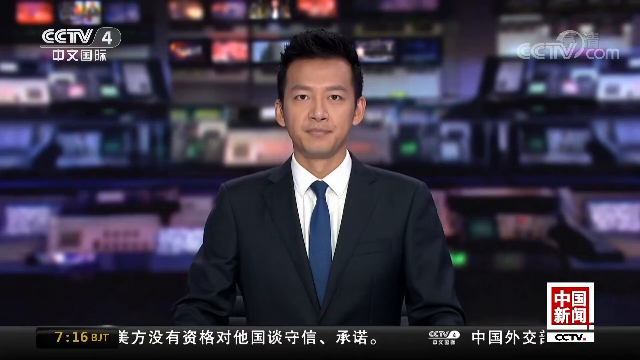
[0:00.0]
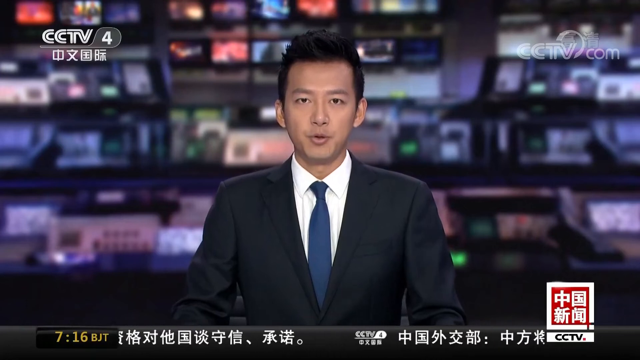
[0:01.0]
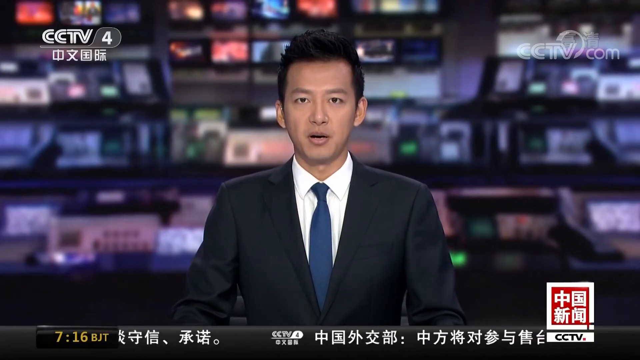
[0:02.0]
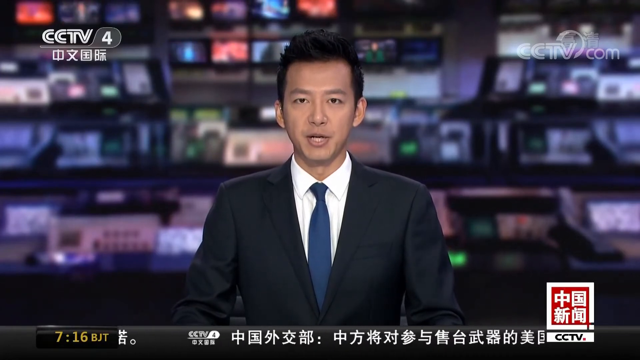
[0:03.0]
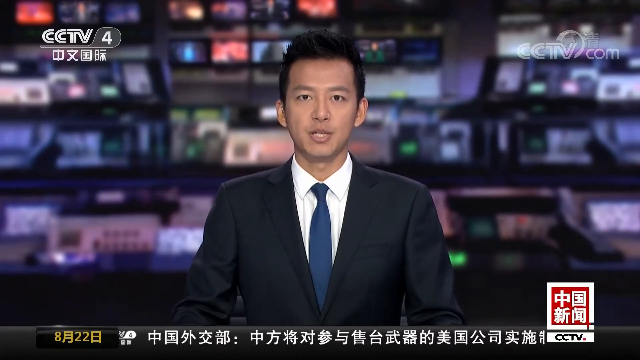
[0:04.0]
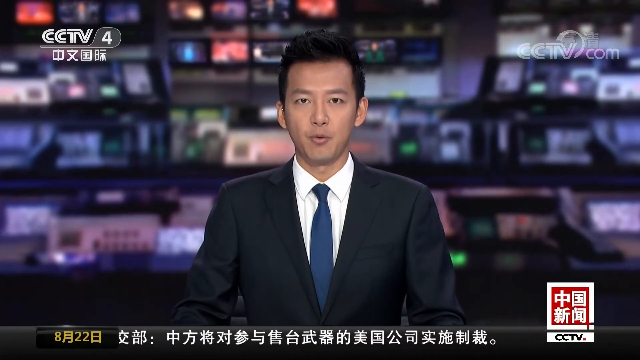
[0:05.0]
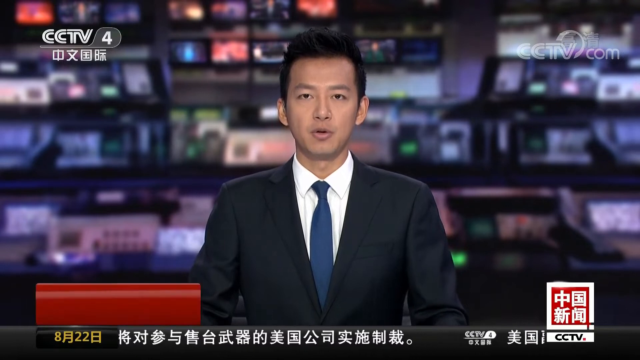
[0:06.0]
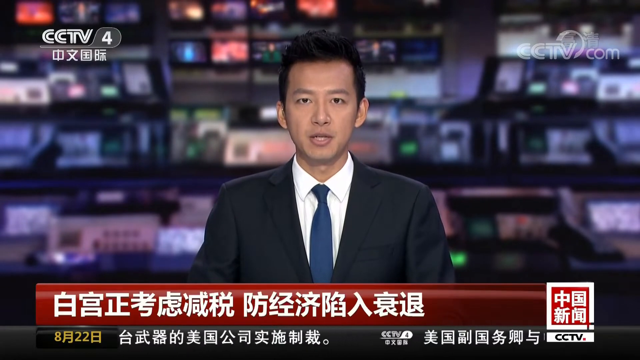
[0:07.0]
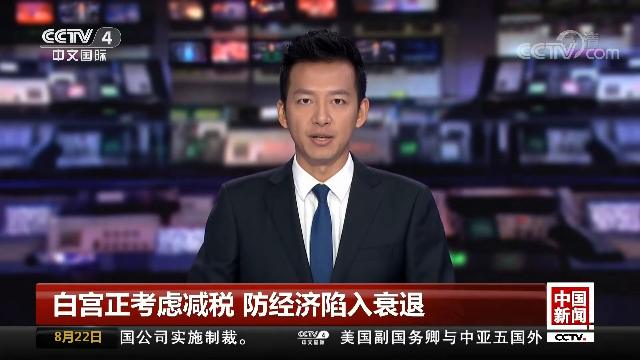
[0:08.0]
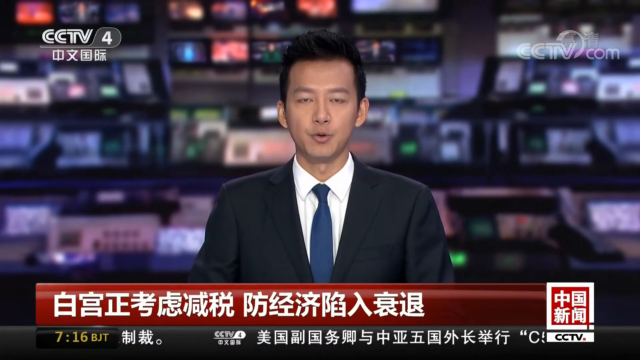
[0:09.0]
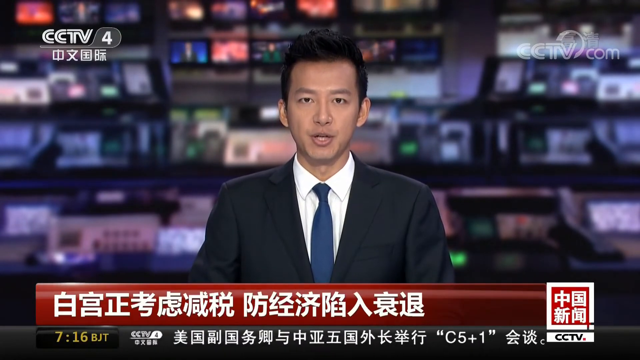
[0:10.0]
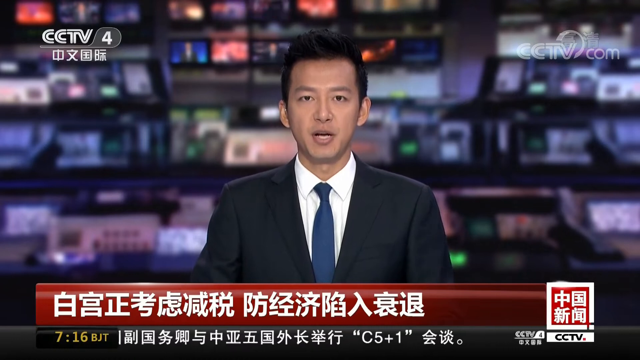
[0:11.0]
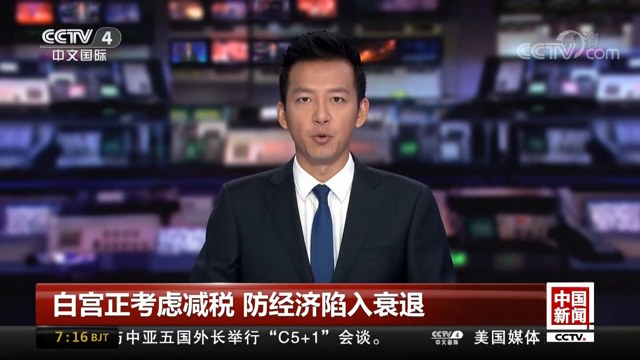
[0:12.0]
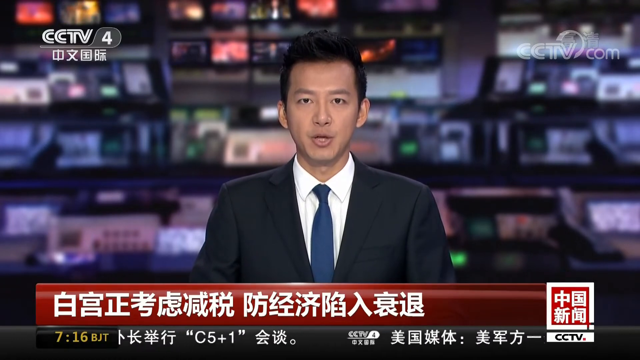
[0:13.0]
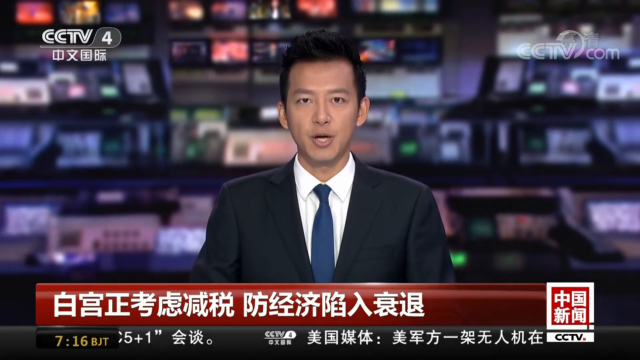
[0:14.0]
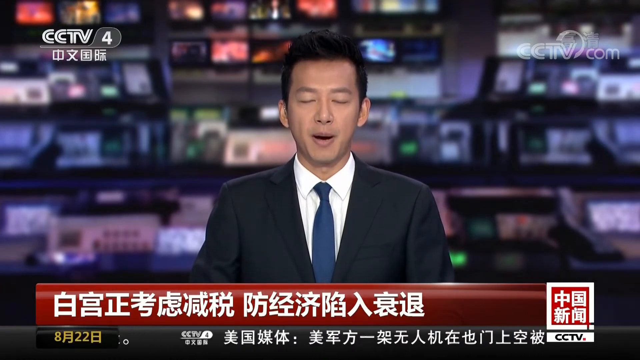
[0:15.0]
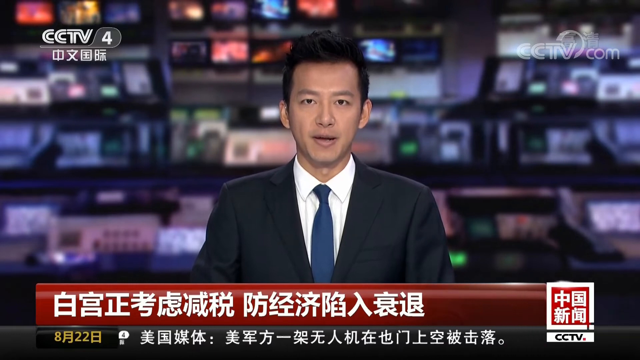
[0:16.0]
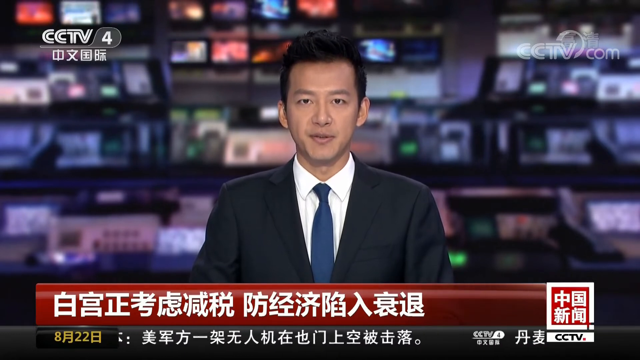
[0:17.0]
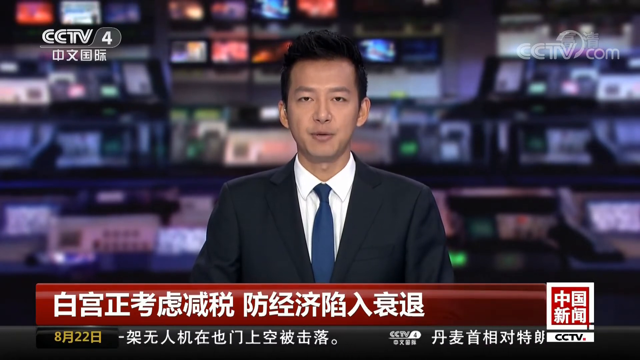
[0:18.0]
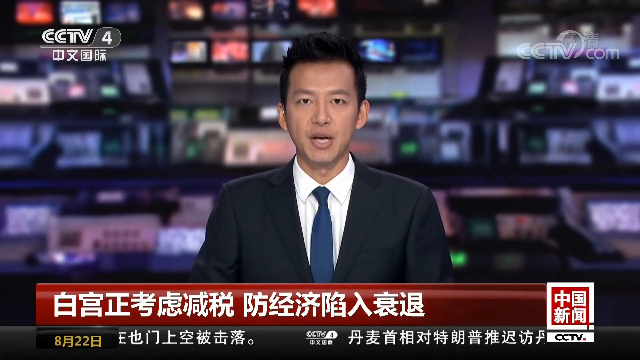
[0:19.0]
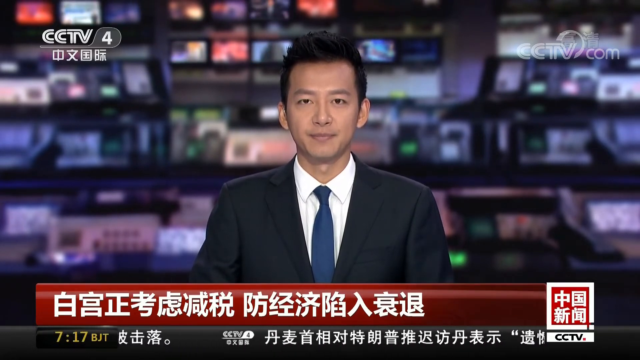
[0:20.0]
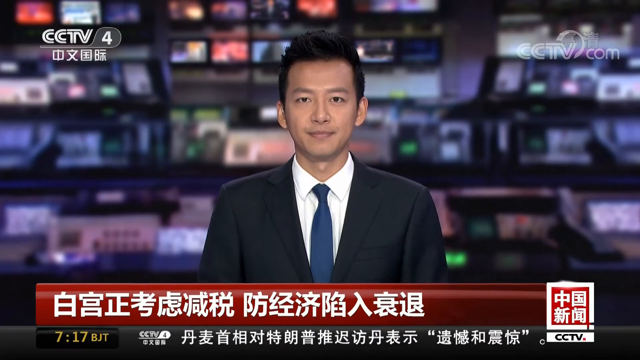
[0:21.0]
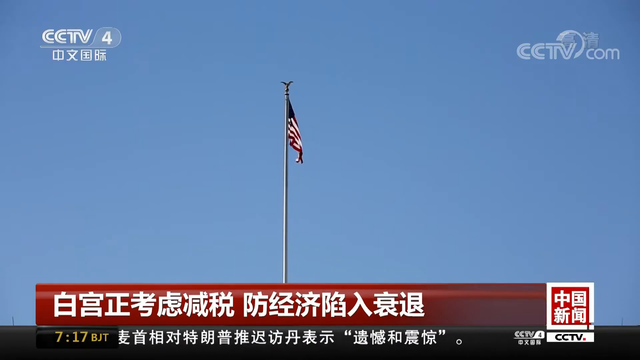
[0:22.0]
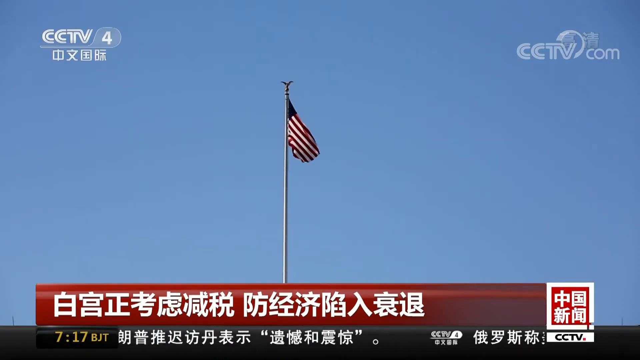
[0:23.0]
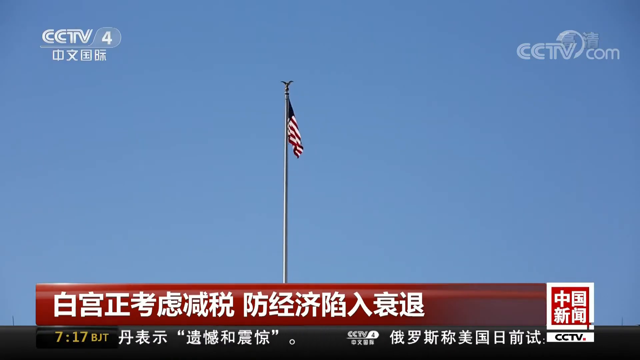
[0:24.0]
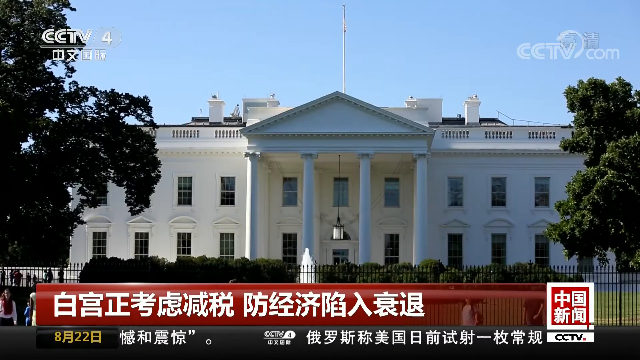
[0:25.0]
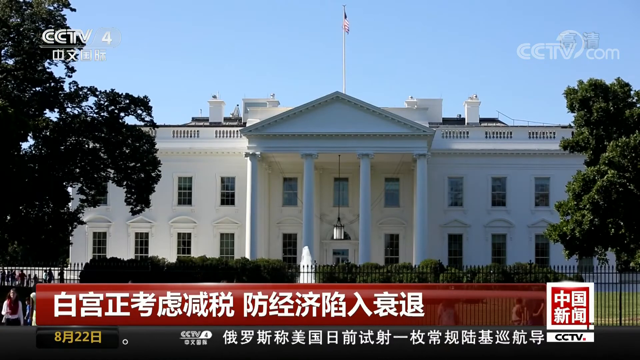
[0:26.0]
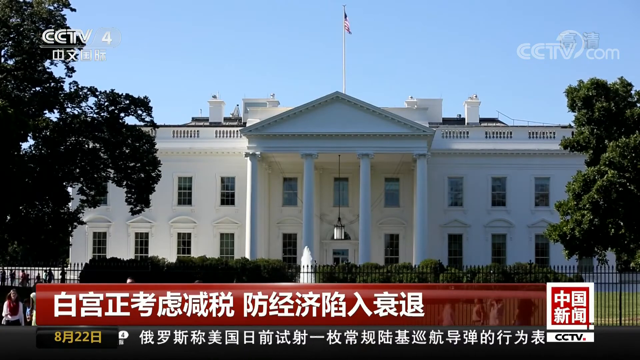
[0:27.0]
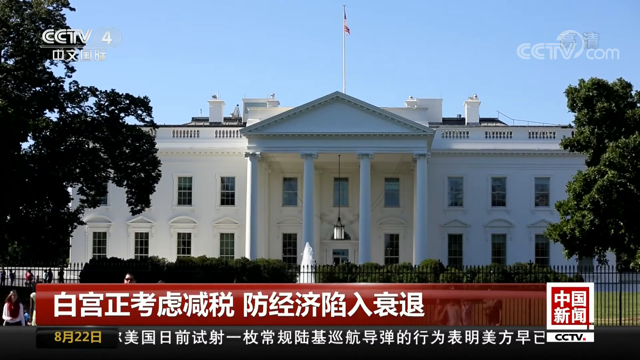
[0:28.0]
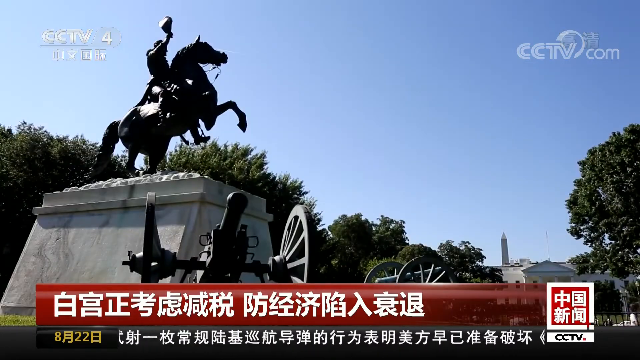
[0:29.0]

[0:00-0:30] A man who appears to be Asian presents what looks like a news report, speaking directly to the camera. The words on the screen suggest it is maybe Chinese. At the bottom of the screen there is text, probably the title of the report, all in Chinese. He then stops talking, and the video apparently transitions into the report: an American flag on a flagpole against a clear blue sky right over the White House, followed by a statue of a man riding a horse in front of the White House. The report seems to be about America in some way.